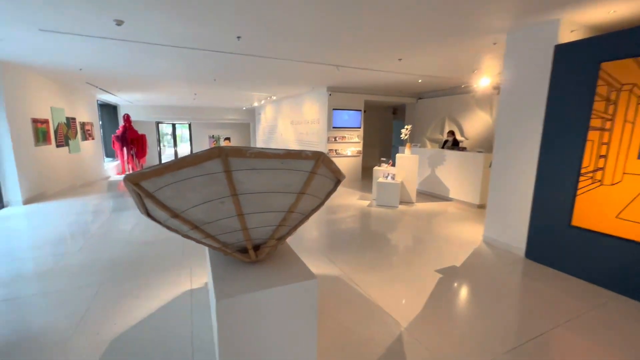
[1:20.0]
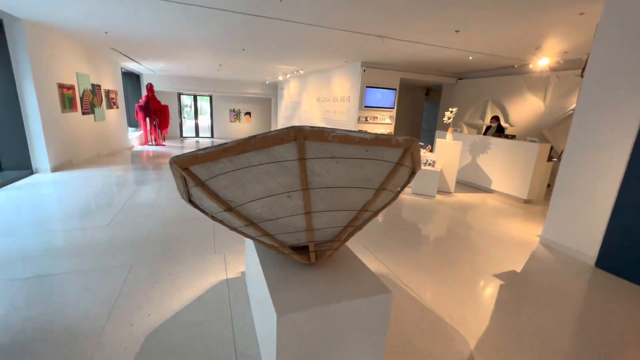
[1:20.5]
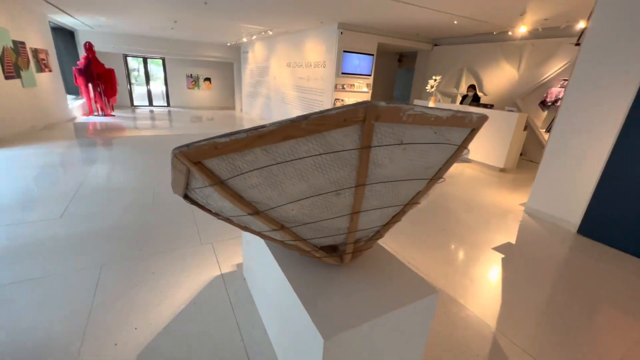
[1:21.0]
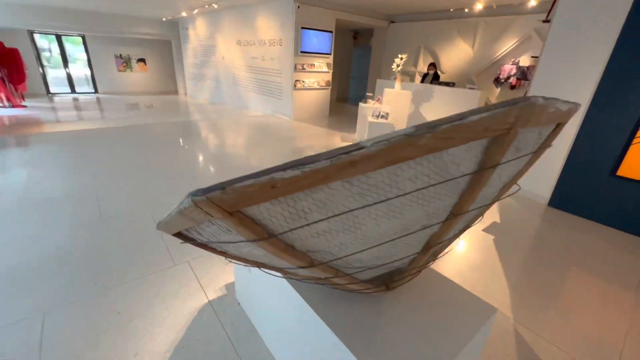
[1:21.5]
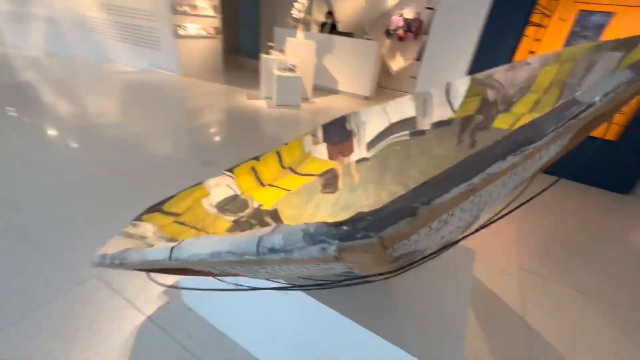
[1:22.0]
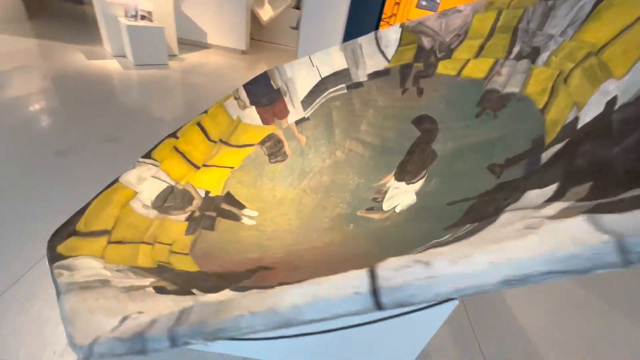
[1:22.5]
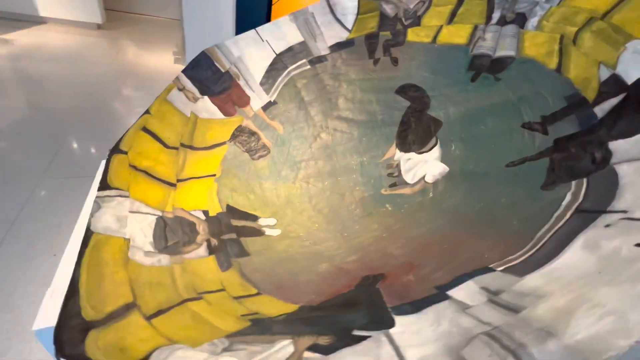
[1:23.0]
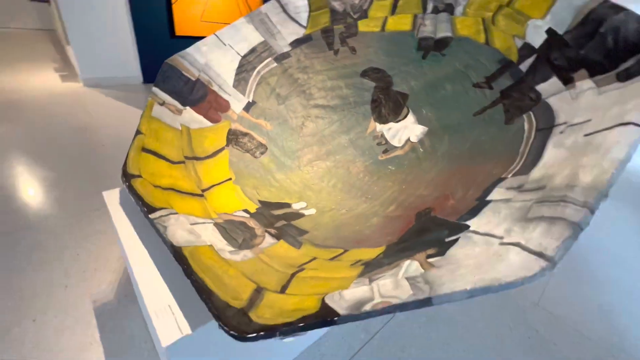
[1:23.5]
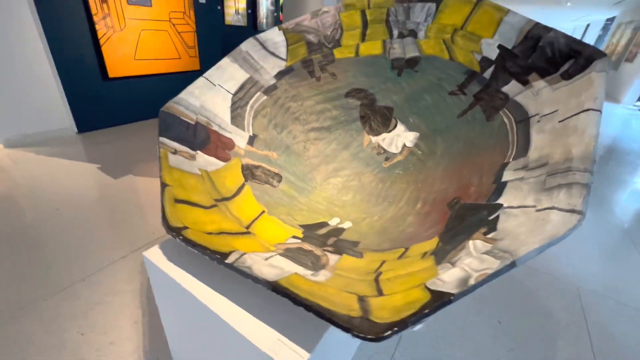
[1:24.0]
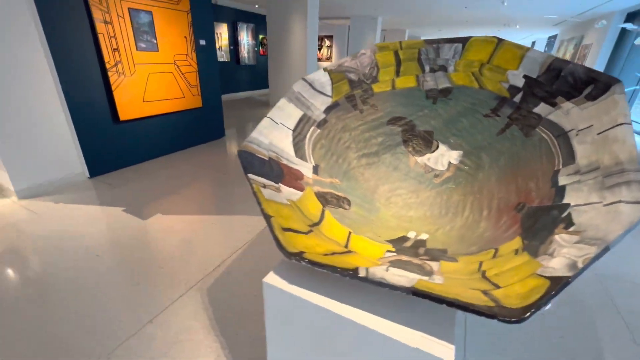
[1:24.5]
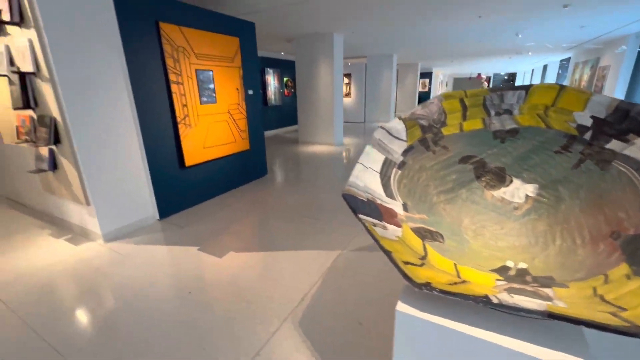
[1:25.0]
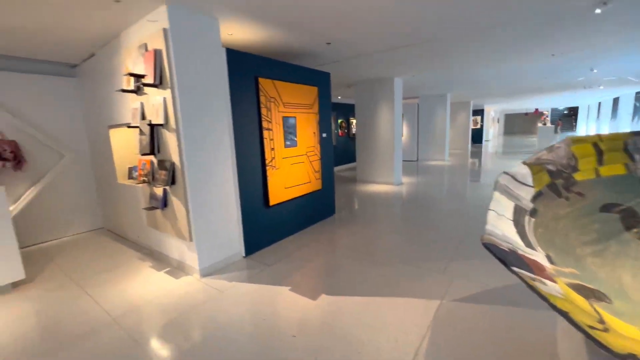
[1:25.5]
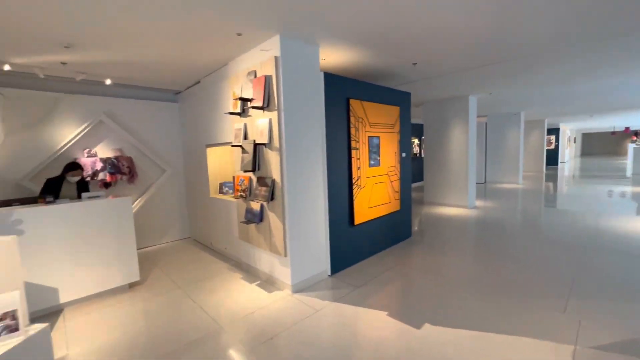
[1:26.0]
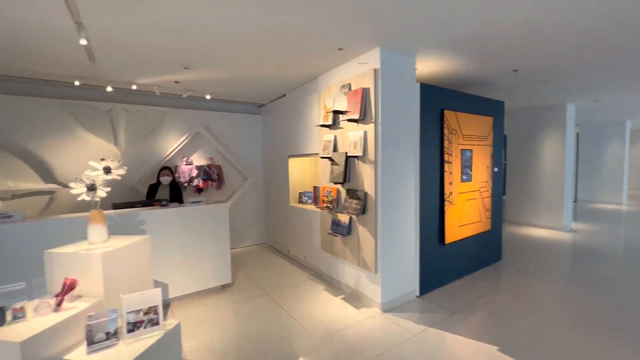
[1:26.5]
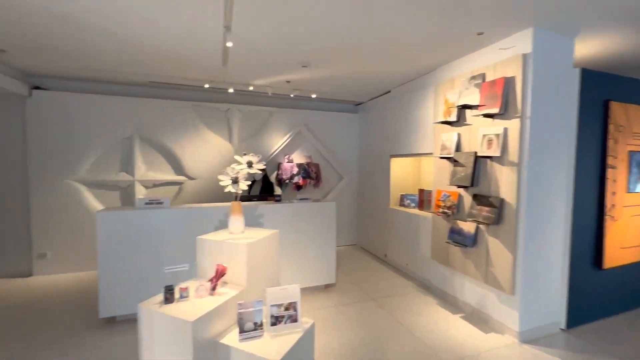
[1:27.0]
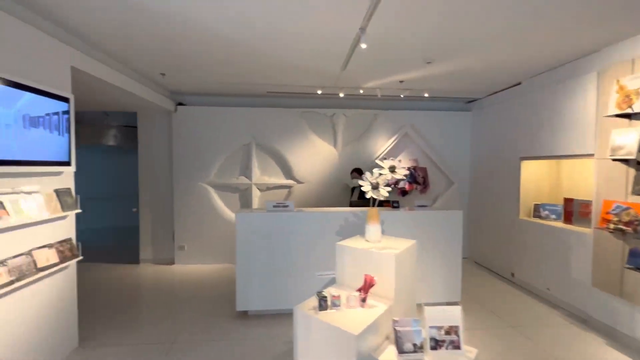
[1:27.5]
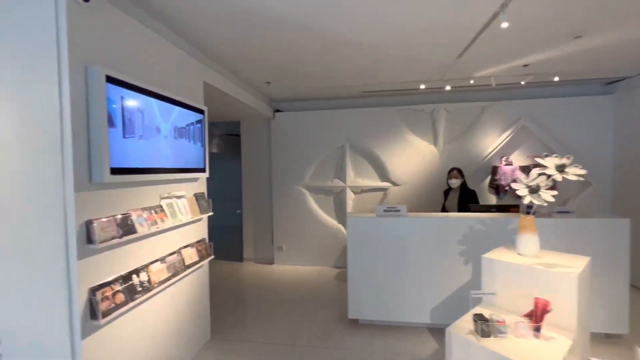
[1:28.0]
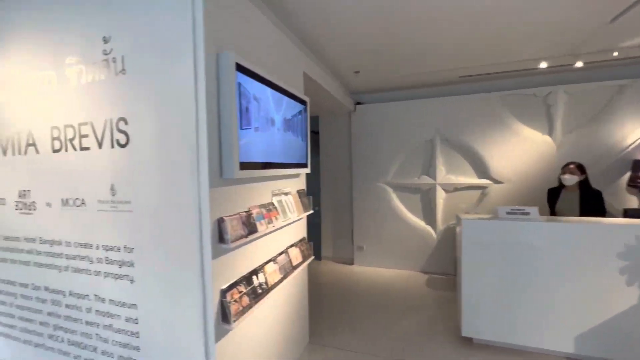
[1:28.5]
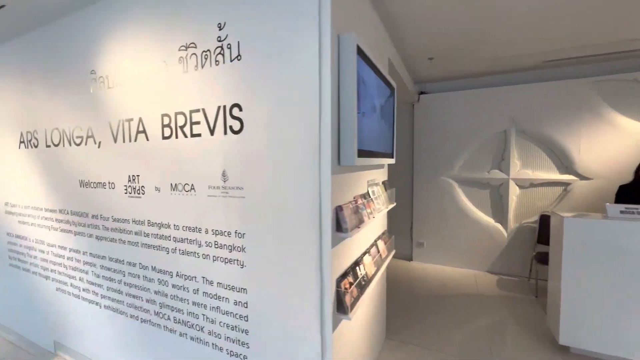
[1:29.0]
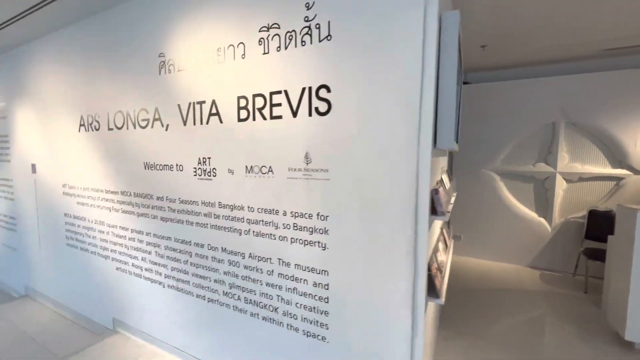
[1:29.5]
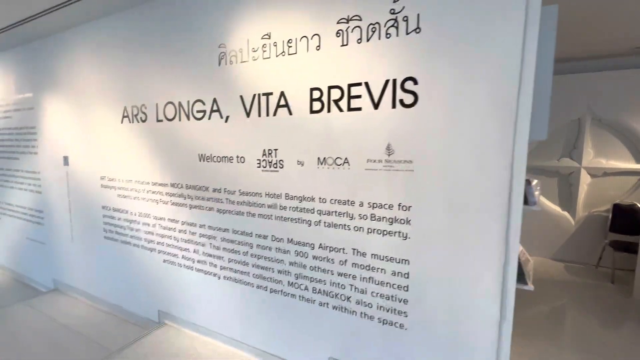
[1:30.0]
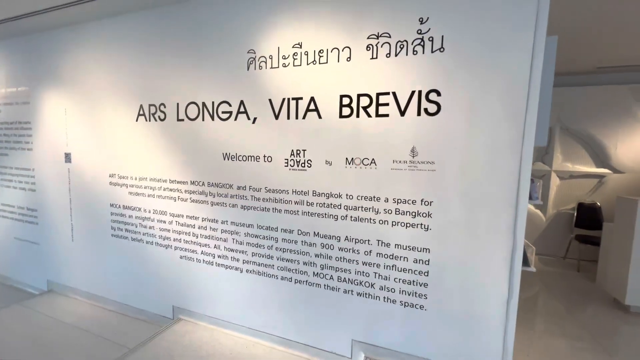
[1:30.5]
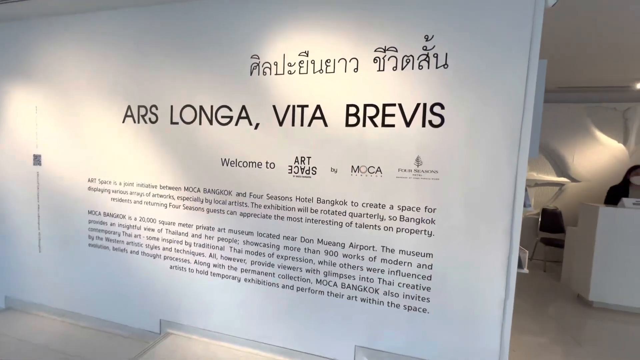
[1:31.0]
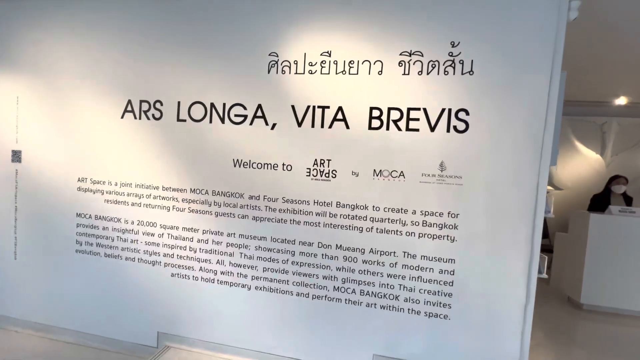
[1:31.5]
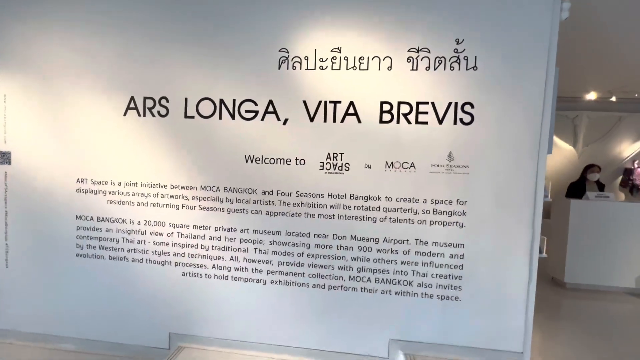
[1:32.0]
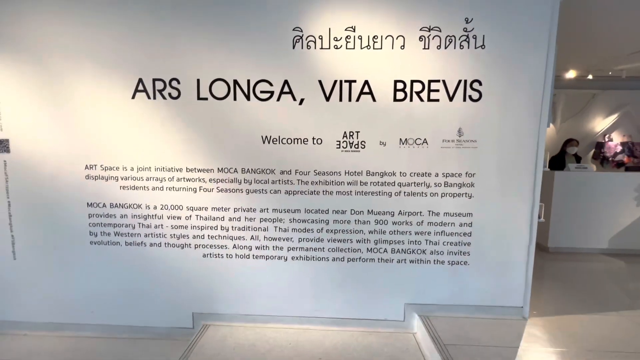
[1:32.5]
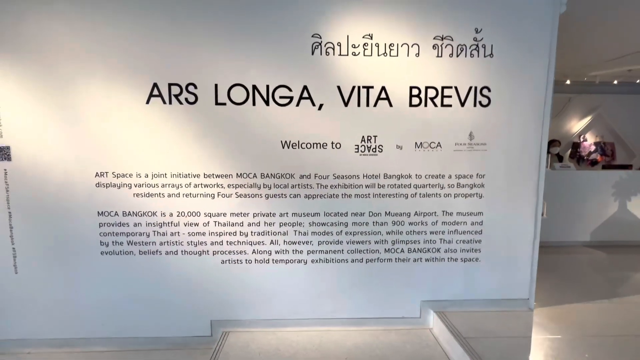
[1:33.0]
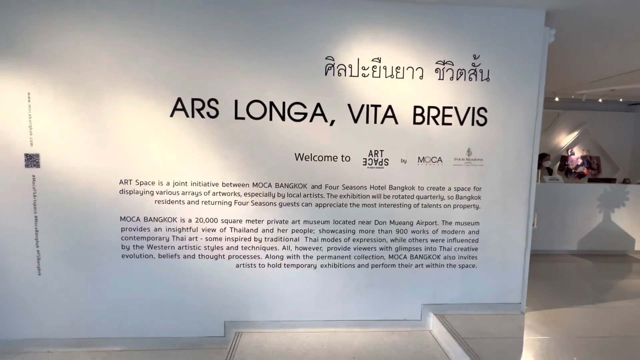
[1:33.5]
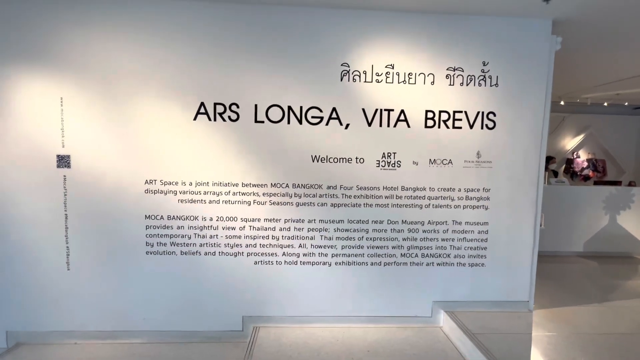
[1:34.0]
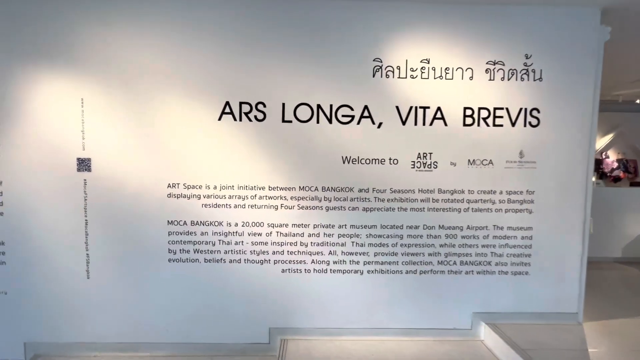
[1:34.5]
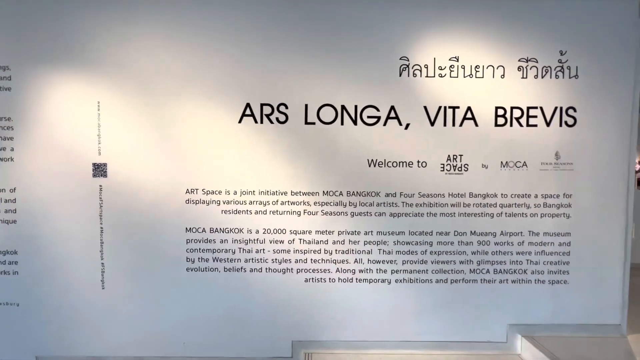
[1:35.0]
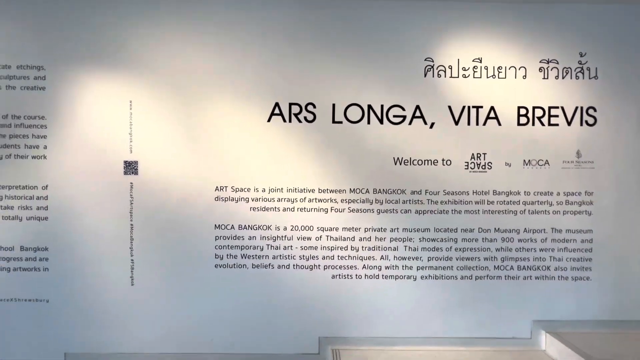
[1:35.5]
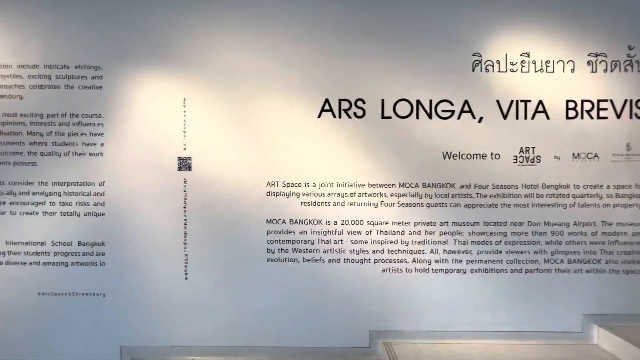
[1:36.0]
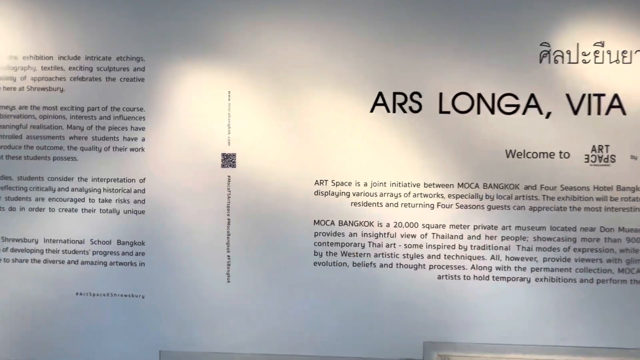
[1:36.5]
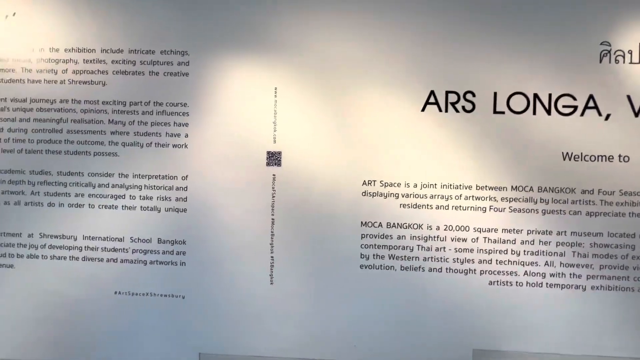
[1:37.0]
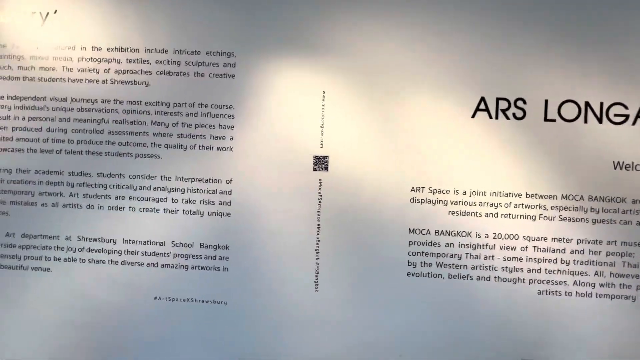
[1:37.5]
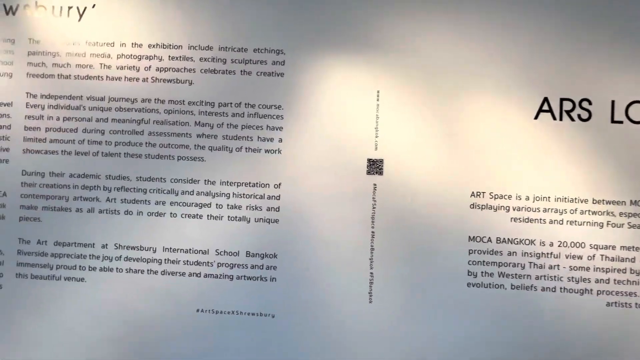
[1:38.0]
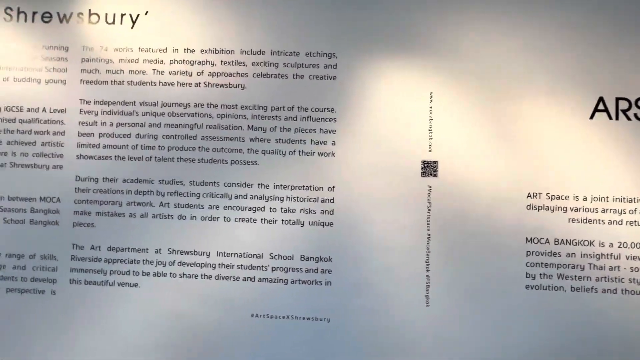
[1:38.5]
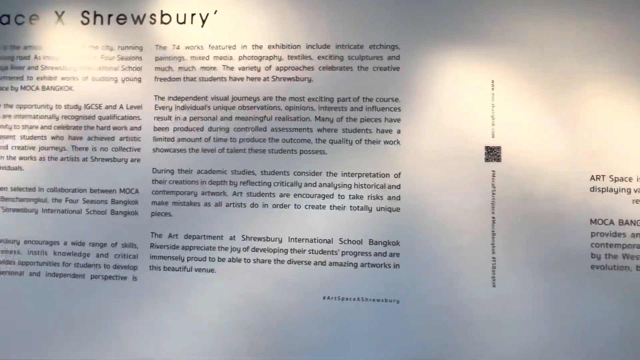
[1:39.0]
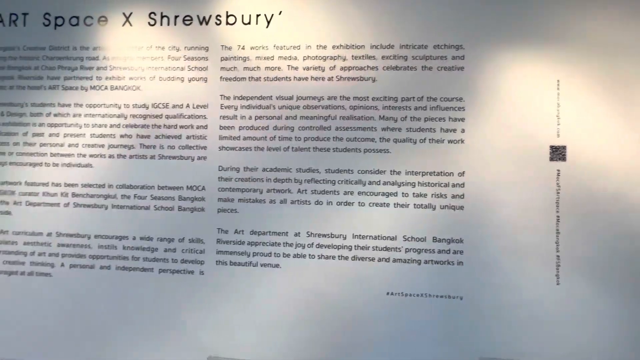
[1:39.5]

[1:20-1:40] Inside an art gallery with very unusual contemporary art, a large dish is displayed on a podium. A story is written on a wall, apparently in a different language, and the wall says "Art Space Shrewsbury". There are some dark walls within the gallery, but mostly everything is white: the floor, the ceiling and most of the walls. Some white rooms have artwork etched into the wall. A large story printed on one of the walls takes up double space. Down at the end there seems to be something large and red, almost like a mannequin, and there is a desk. A woman works at the desk, walking from one side to the other behind it; she may be an employee of the gallery and appears to be the only one at that desk. She wears a white mask.